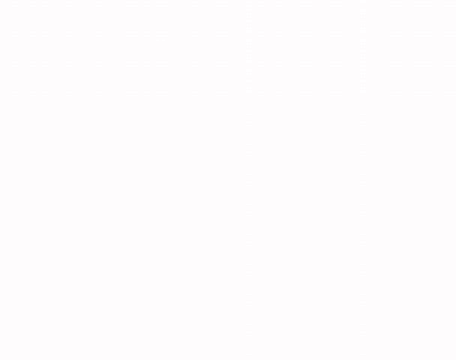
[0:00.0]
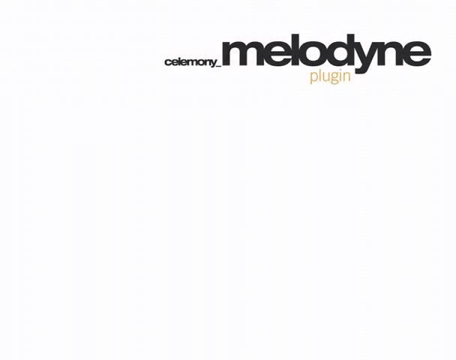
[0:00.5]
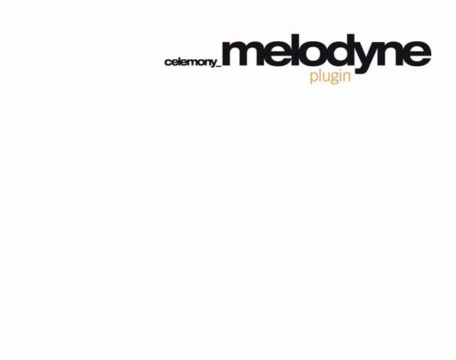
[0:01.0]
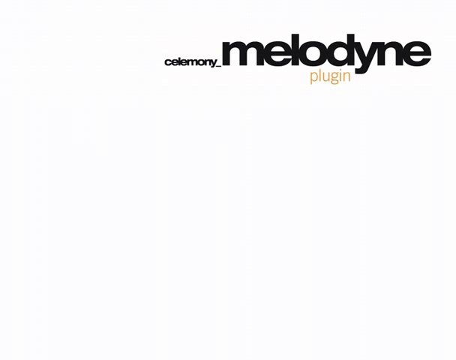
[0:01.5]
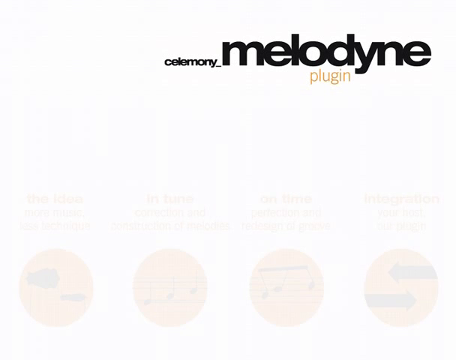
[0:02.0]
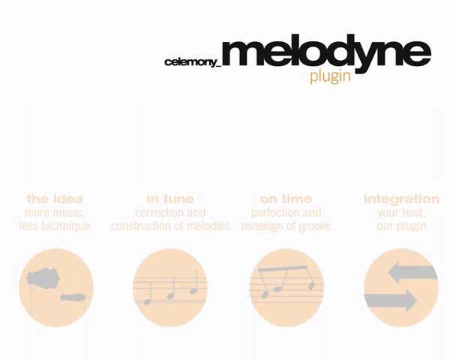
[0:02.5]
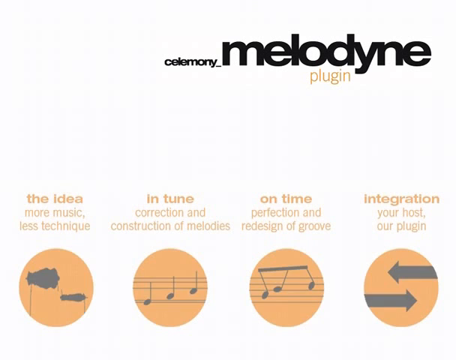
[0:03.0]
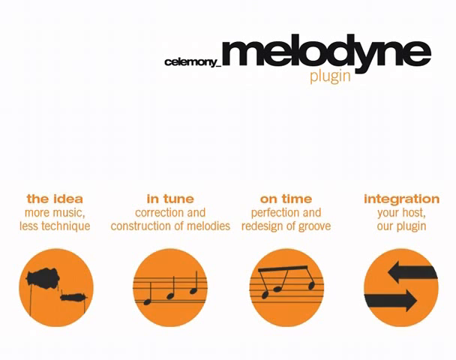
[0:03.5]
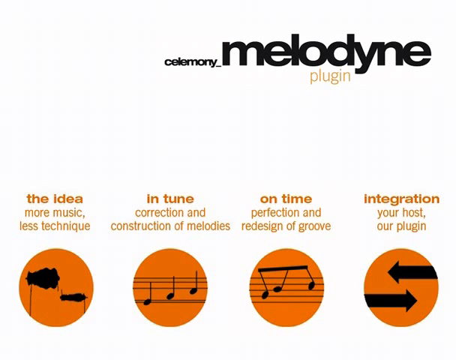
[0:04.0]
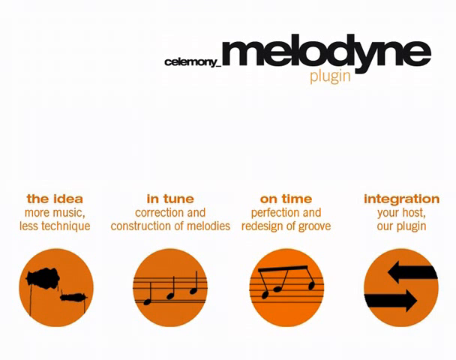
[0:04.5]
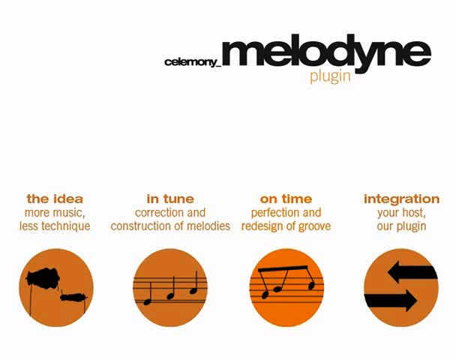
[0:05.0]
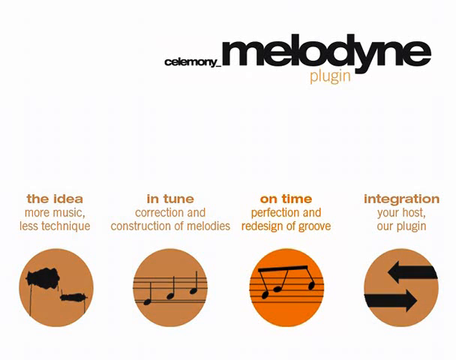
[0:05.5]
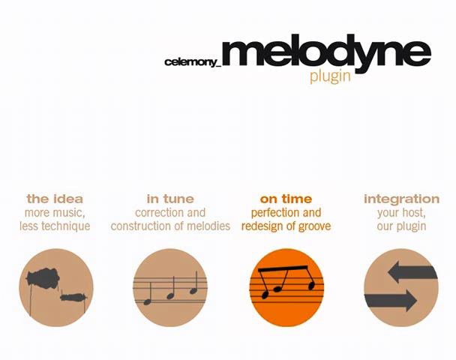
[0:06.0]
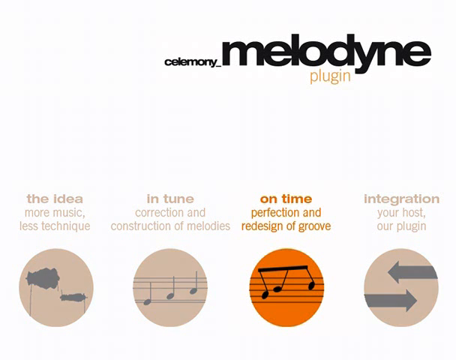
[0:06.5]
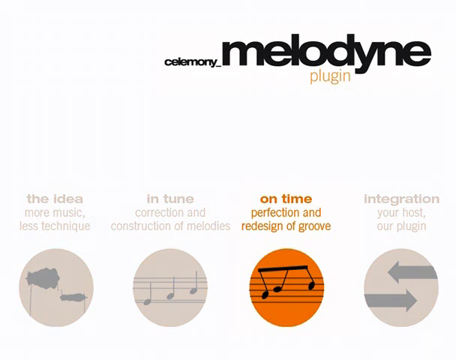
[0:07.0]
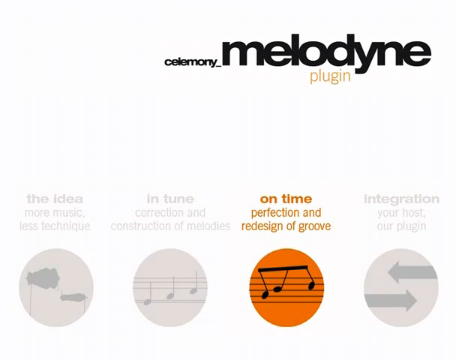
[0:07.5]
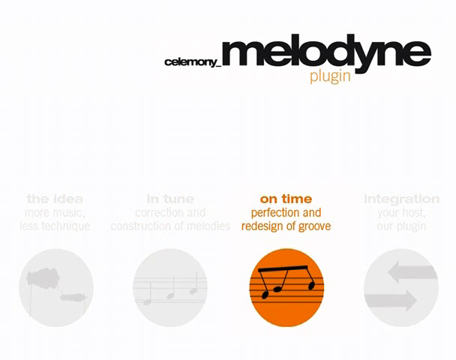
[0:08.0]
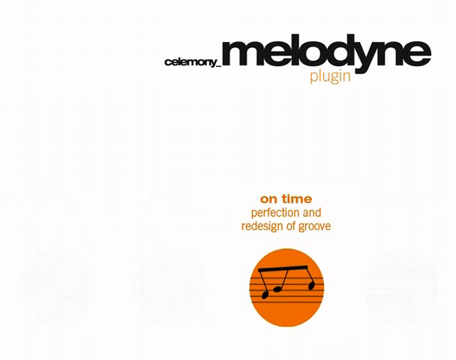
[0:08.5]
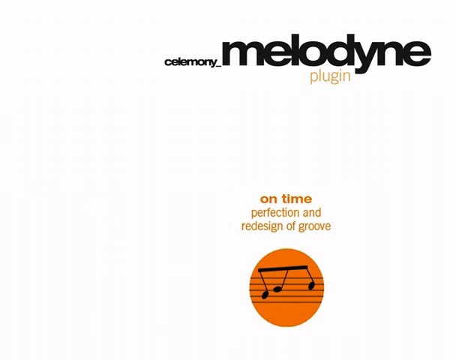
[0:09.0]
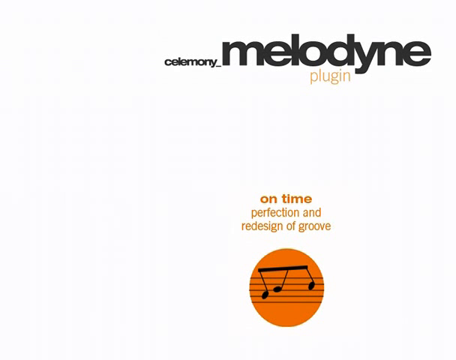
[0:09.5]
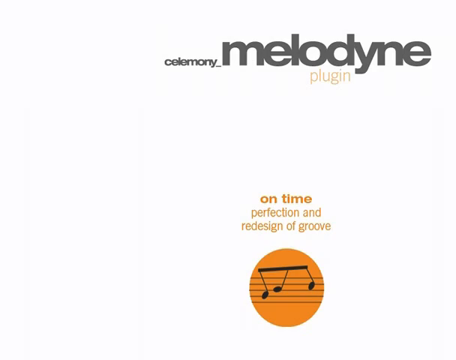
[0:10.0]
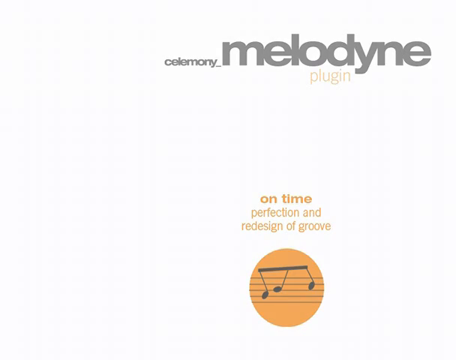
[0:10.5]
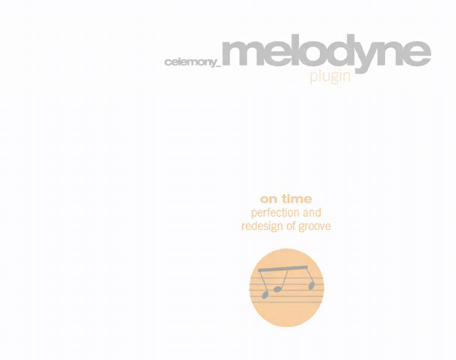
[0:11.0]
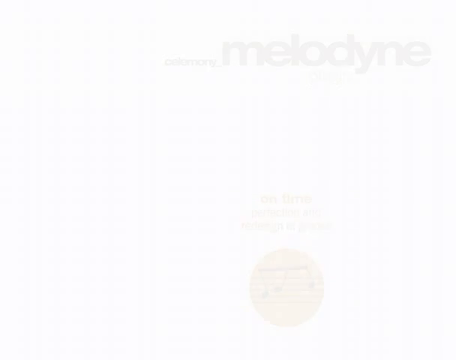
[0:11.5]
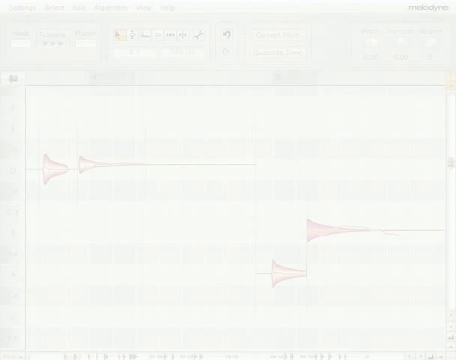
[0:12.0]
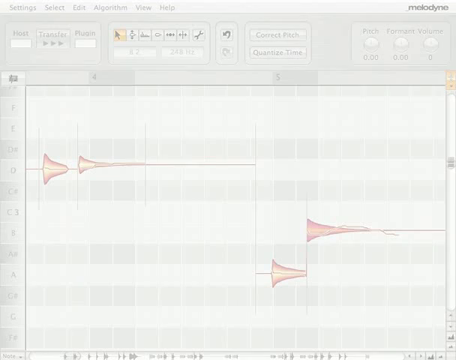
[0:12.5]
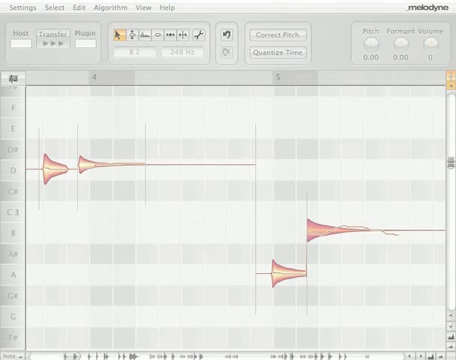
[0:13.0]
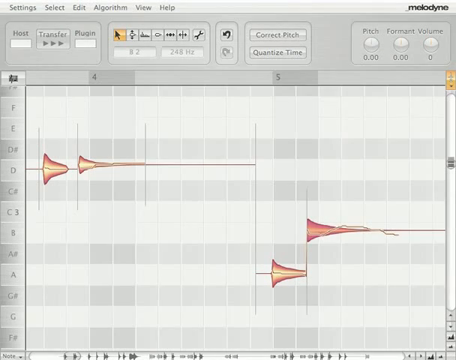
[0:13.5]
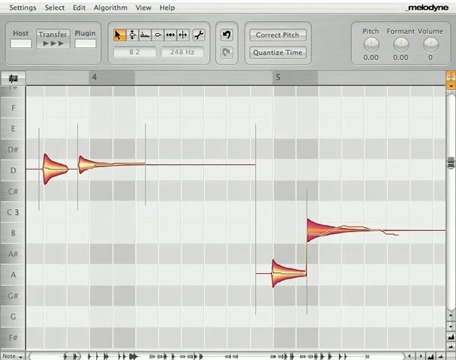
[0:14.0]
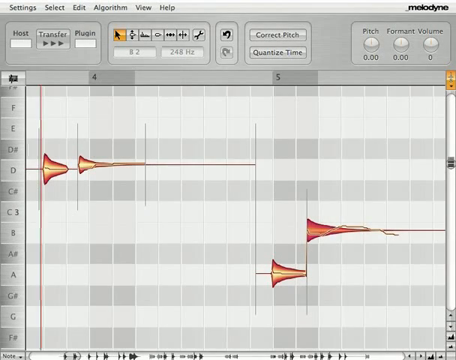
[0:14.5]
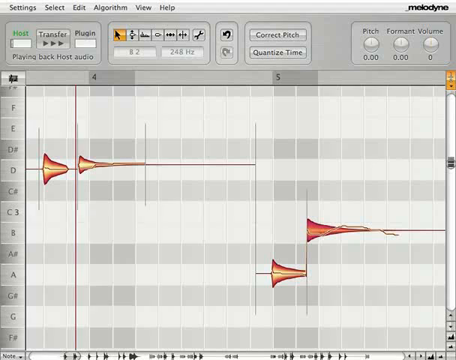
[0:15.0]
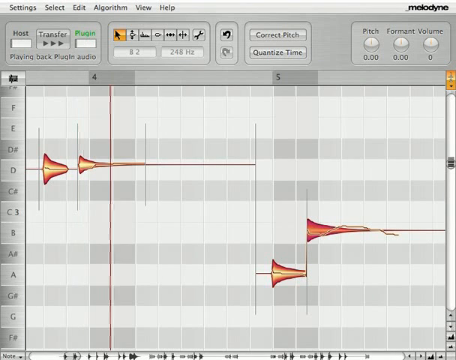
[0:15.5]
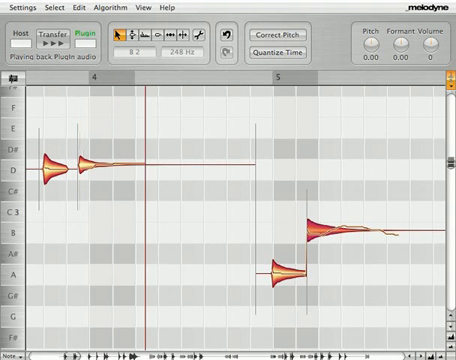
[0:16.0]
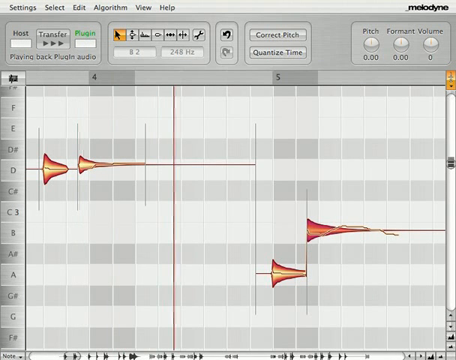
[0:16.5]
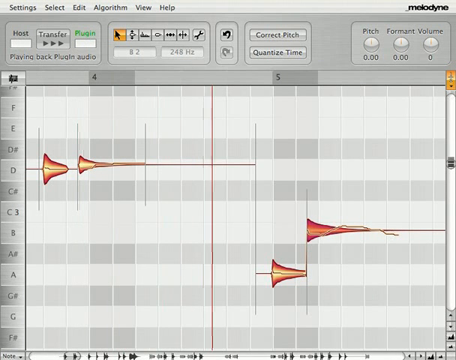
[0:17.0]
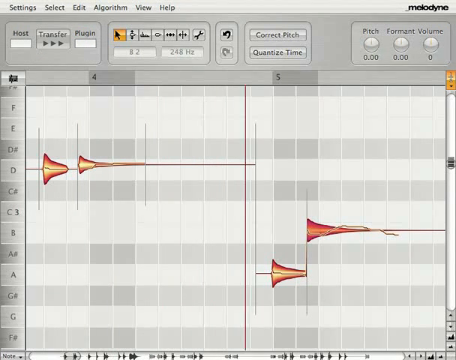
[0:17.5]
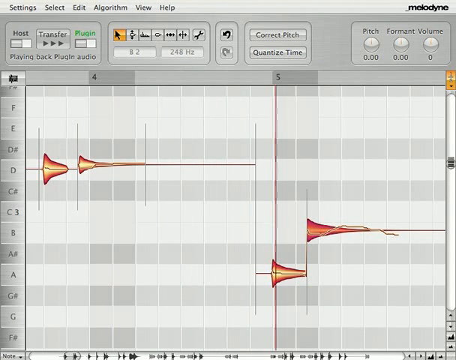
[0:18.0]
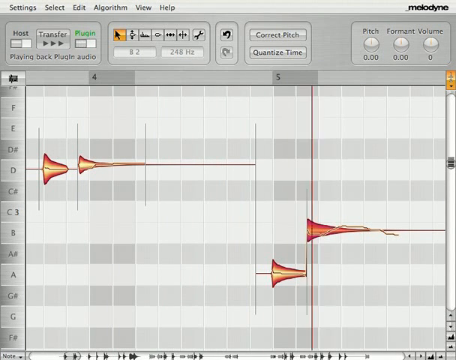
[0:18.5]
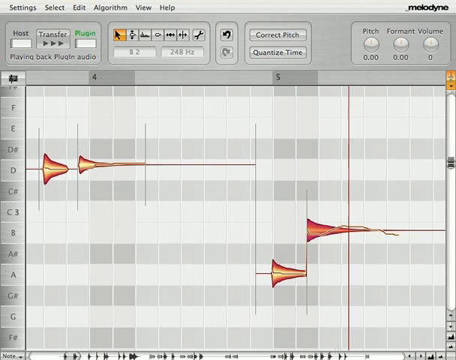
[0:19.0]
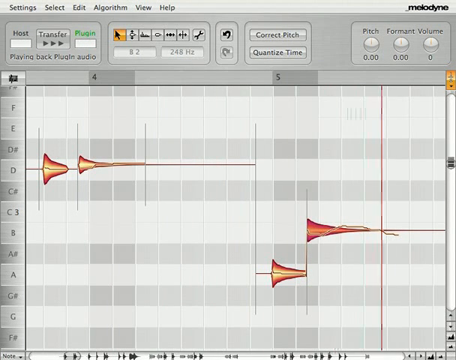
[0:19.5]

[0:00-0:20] The video is by Melodyne Plugin and opens on a front page that names it Ceremony. Four images appear, including a couple of musical bars, two arrows (one pointing left and another below it pointing right), and a couple of jagged images. Four points are presented: the overall idea of more music, less techniques; in tune, meaning correction and construction of melodies; on time, meaning perfection and redesign of groove; and integration, meaning your host and our plugin. Three of the points fade away, leaving on time with perfection and redesign of groove, and then that fades too. A screenshot of the Melodyne software follows: a grey grid with what appear to be musical notes down the left-hand side (F, E, D sharp, D, C sharp, C, B, A sharp, A, G sharp, G and F) and what seems to be time along the bottom axis, with a red line moving across it.